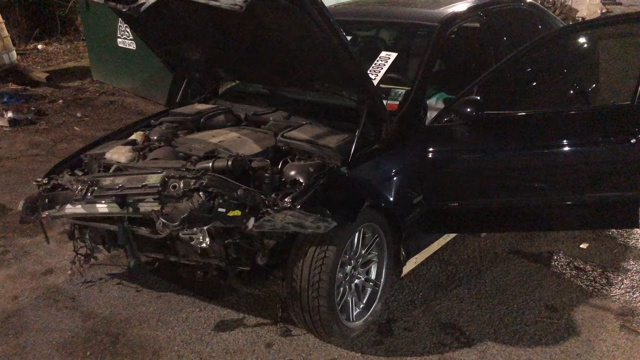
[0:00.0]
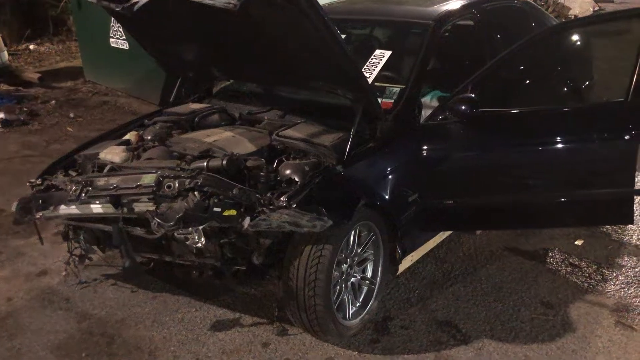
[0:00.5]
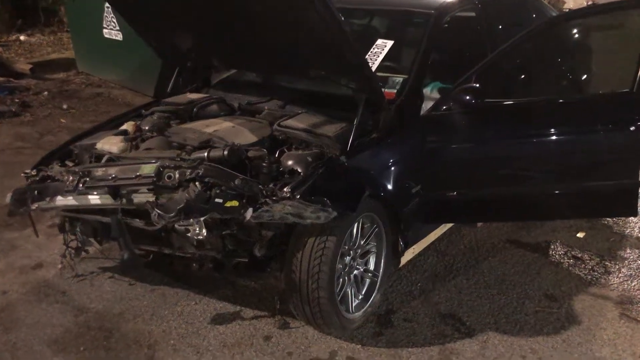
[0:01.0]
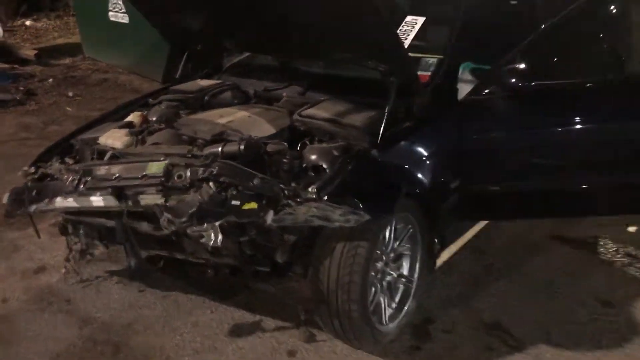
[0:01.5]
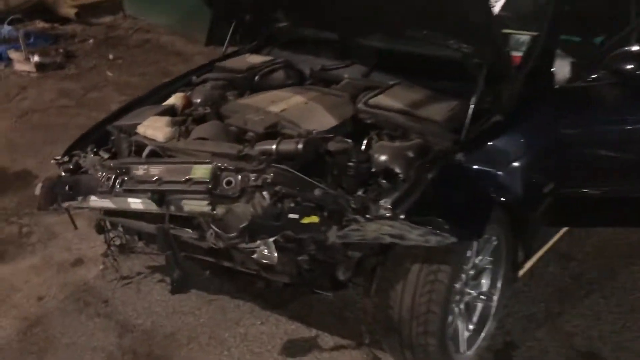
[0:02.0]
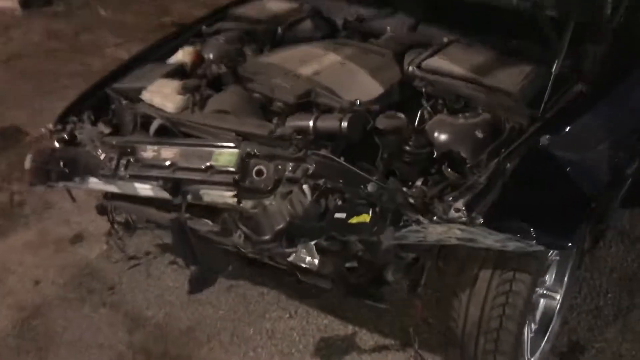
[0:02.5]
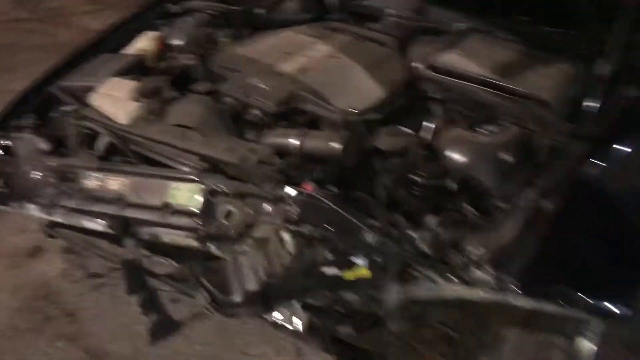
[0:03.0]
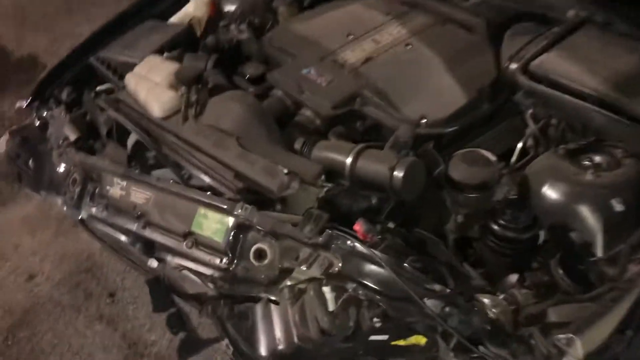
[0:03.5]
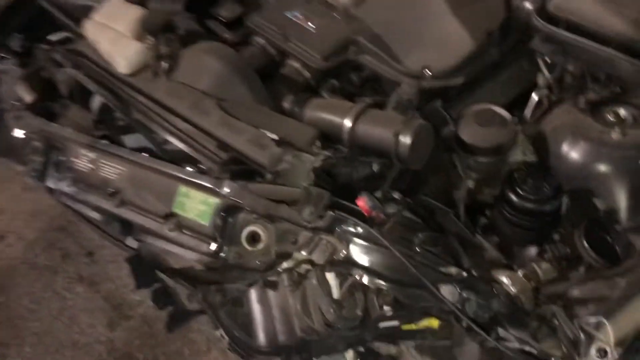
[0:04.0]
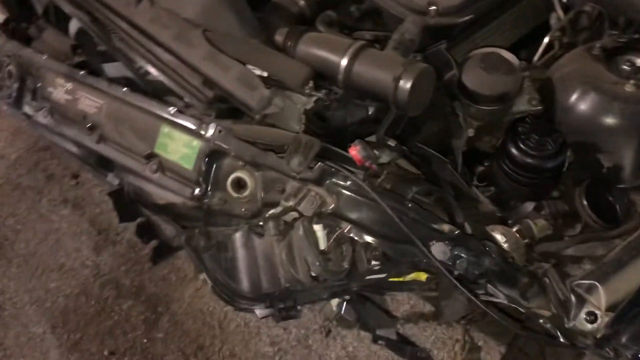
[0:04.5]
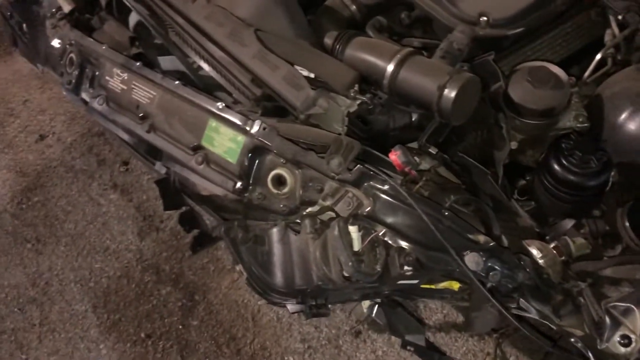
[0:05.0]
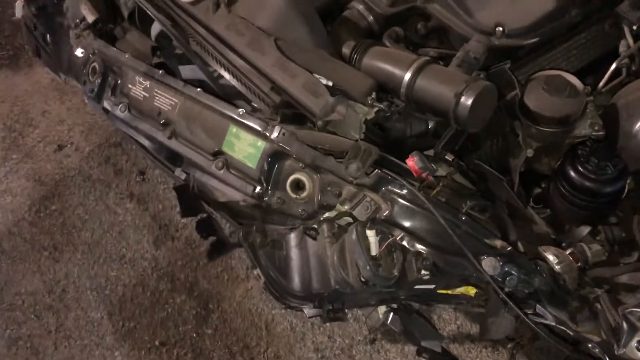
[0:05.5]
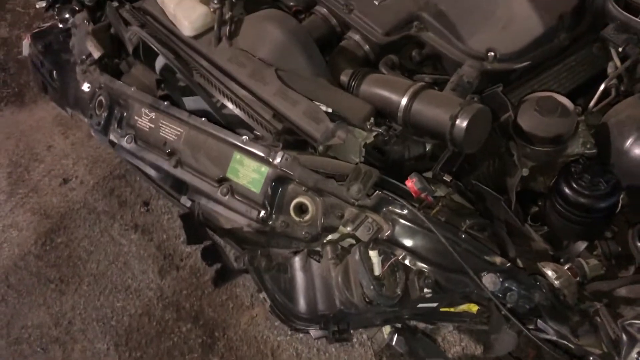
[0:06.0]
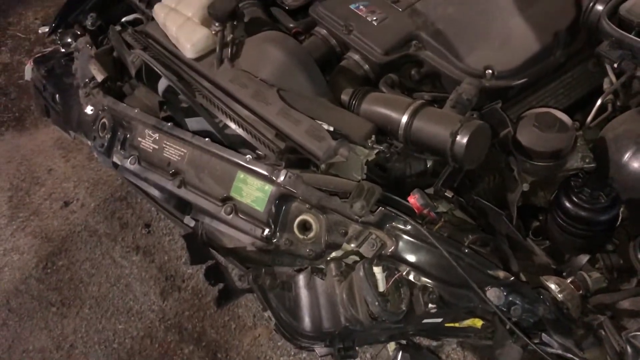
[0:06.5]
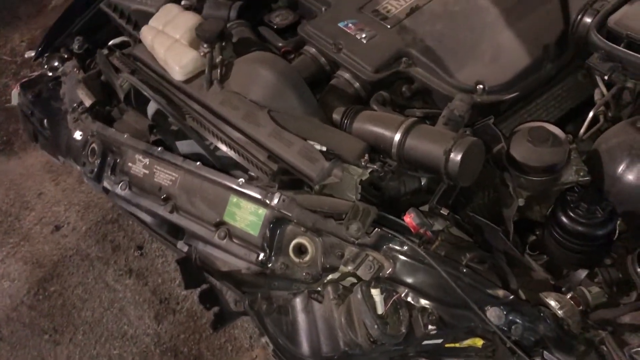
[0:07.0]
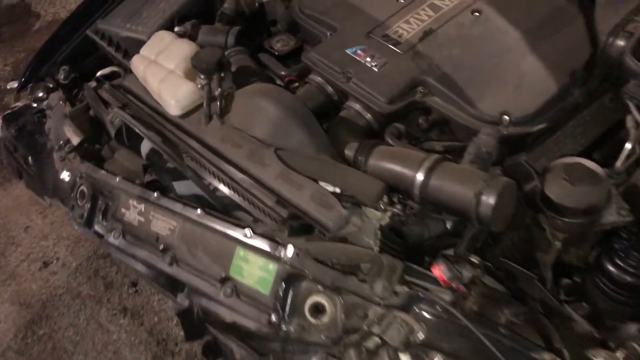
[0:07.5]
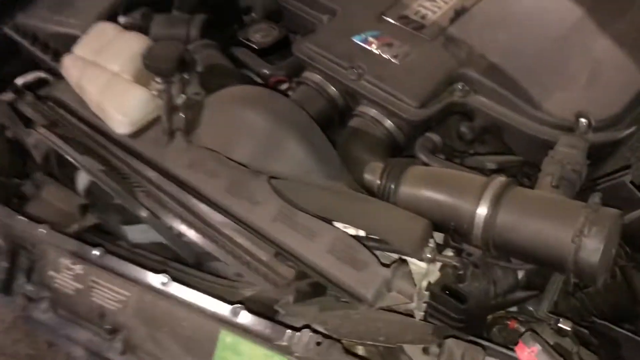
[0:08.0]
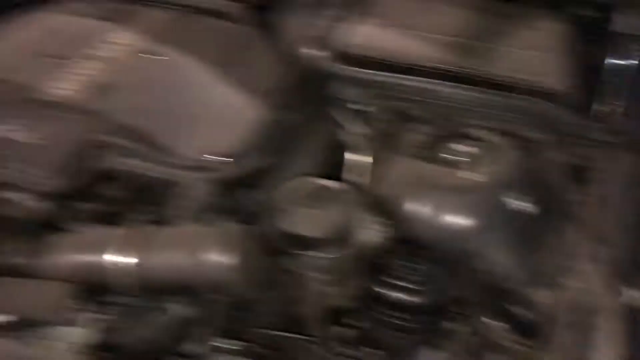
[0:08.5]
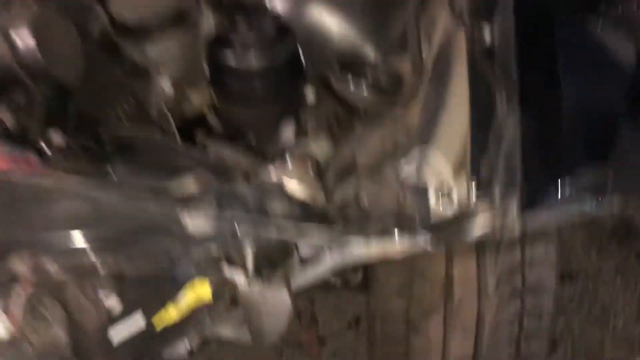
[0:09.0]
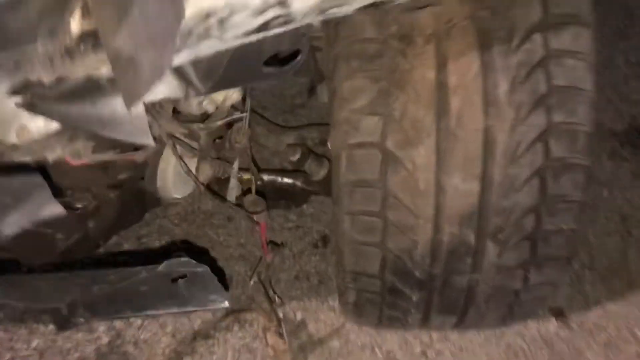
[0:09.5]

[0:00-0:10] A vehicle that has had a head-on front collision is shown with its front bonnet open and its doors open. The front of the frame is badly smashed, the bumper is missing, and parts such as the headlights on the left side are missing. The vehicle faces toward the right. The front plate has been placed on the windscreen. The vehicle appears to be black, though the scene is at night. On the left side there is a green trash can with some white on it.